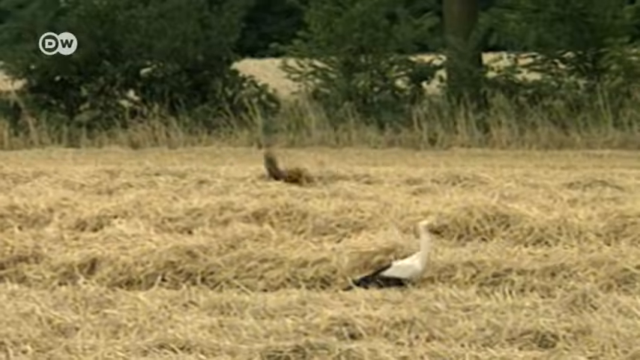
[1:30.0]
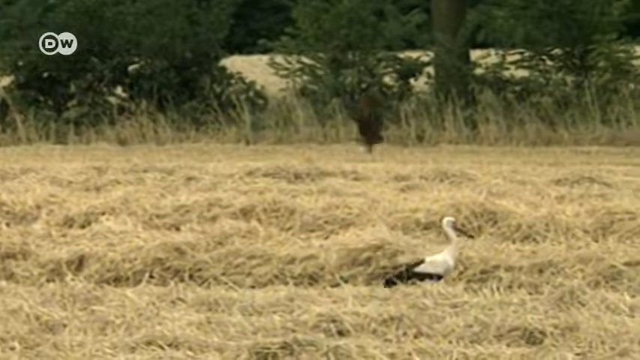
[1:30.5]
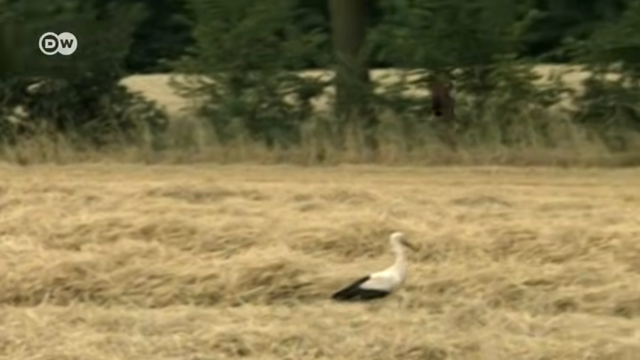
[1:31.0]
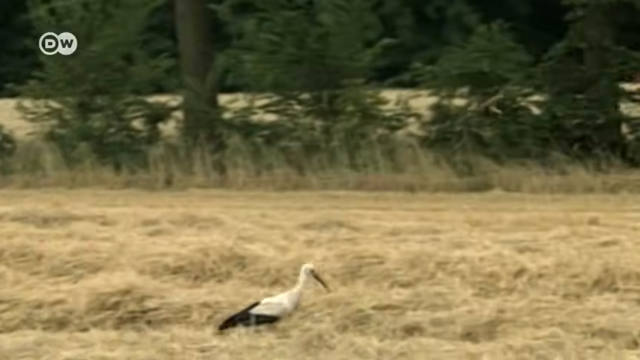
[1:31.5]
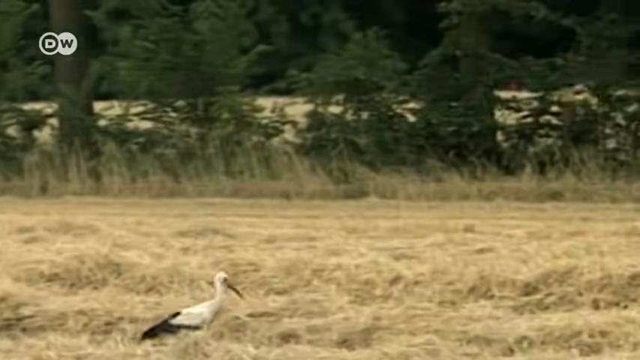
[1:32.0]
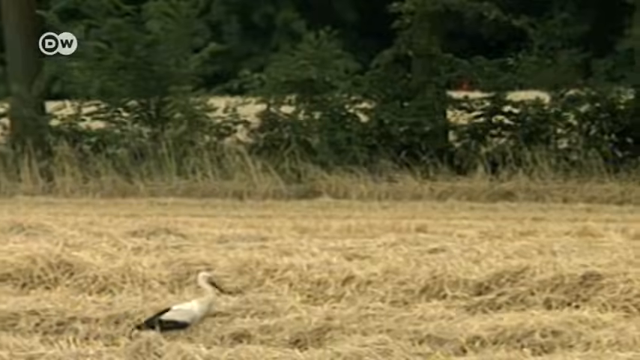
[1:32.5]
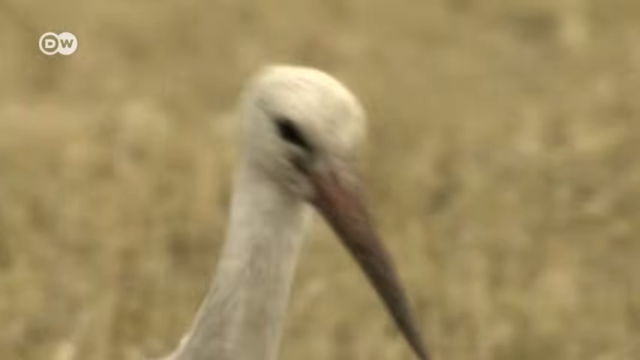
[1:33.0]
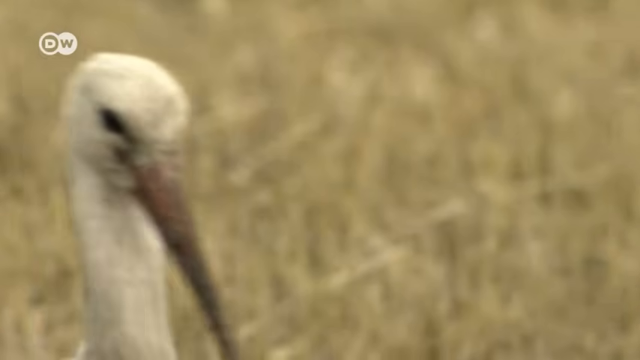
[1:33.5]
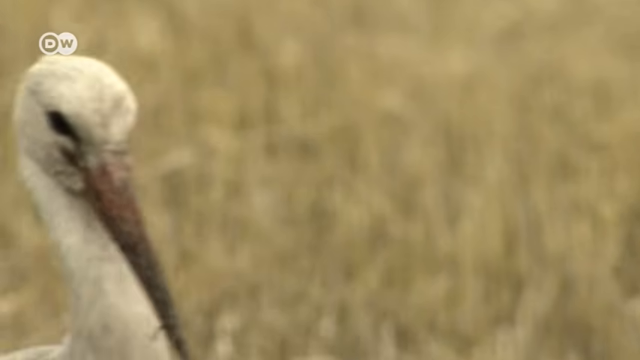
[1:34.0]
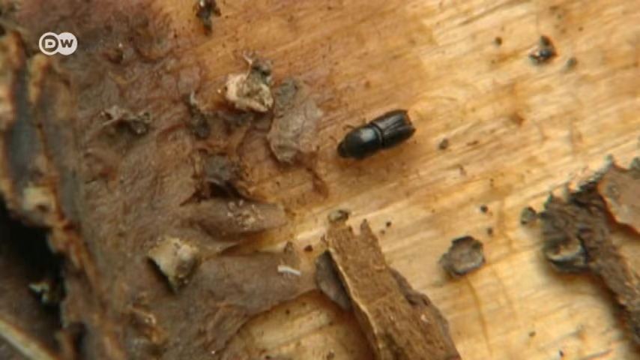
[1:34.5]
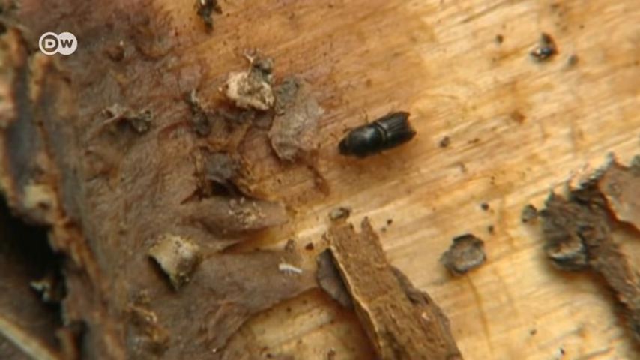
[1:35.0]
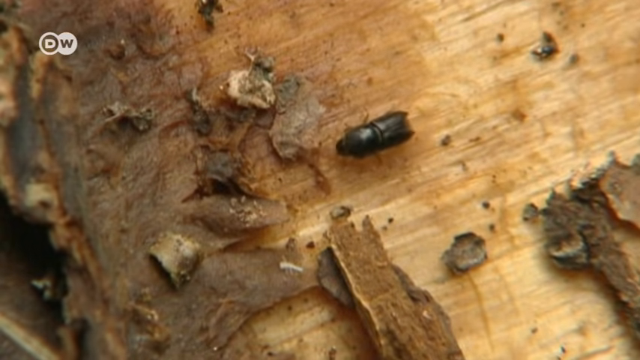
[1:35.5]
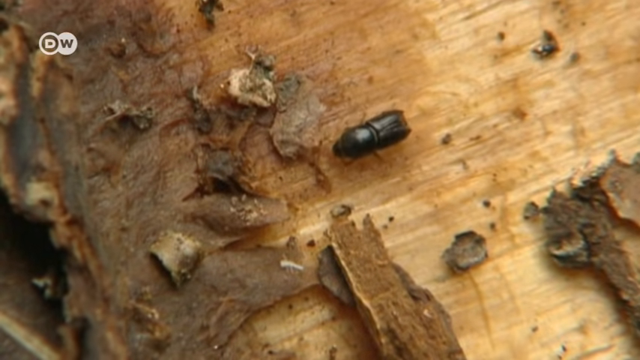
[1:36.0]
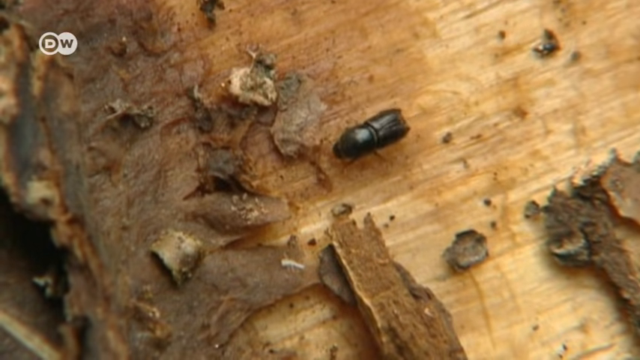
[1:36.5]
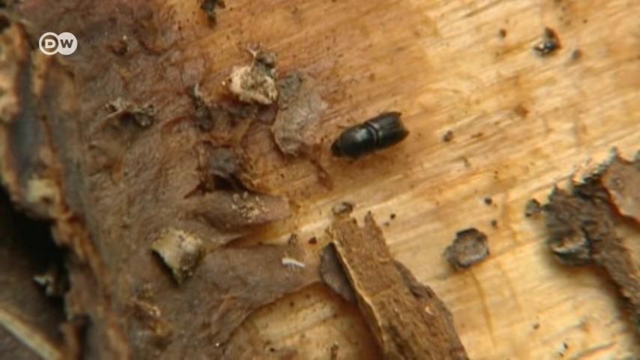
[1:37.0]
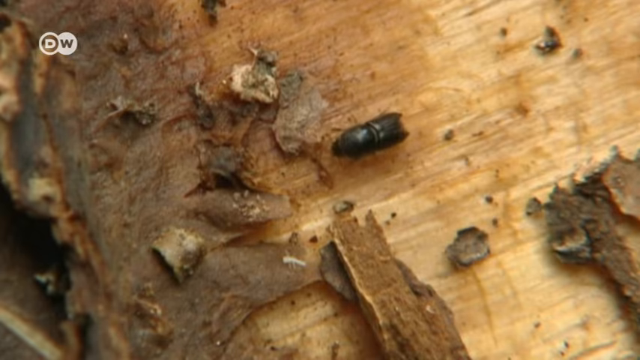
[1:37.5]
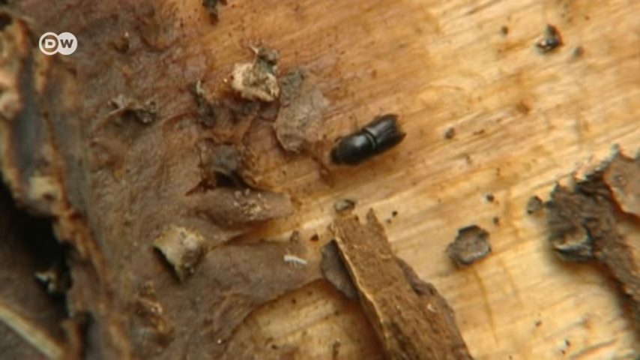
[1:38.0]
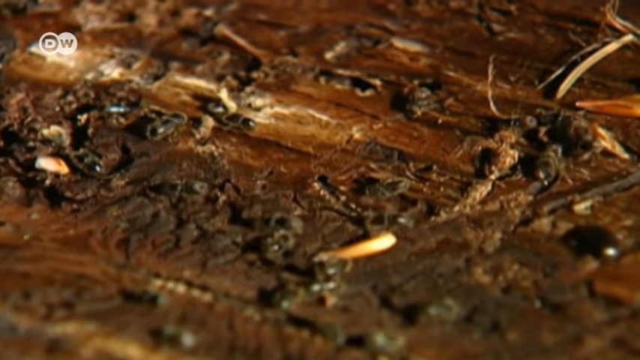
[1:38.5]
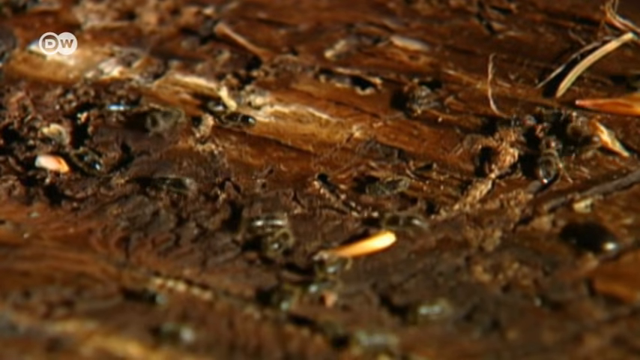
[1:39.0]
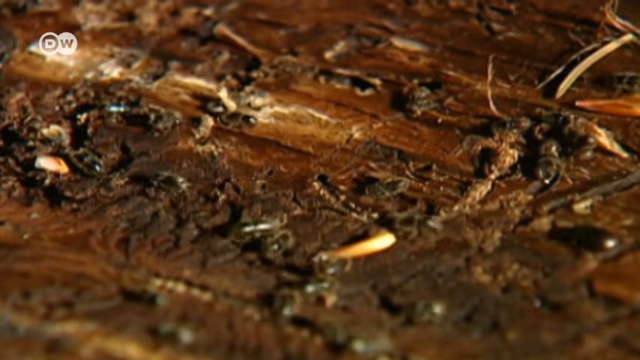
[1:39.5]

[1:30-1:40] The two birds on a very yellow, dry grassland try to find food. One of them flies away while the other walks around. The camera zooms into the face of the bird walking around the dry grassland. The next scene seems to show tree bark with an insect on it; the bark looks rather odd, as if it has some sort of disease. The insect crawls around, and then a group of black insects is also seen crawling around. It is hard to see what the insects are crawling on, but the surface has a lot of dark debris and mess and looks slightly muddy.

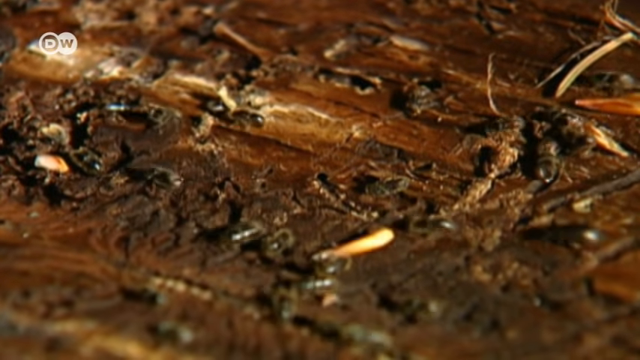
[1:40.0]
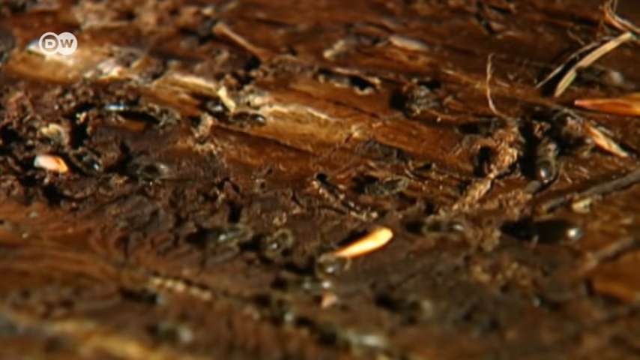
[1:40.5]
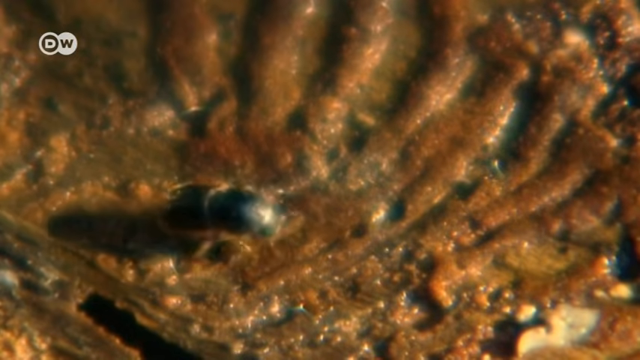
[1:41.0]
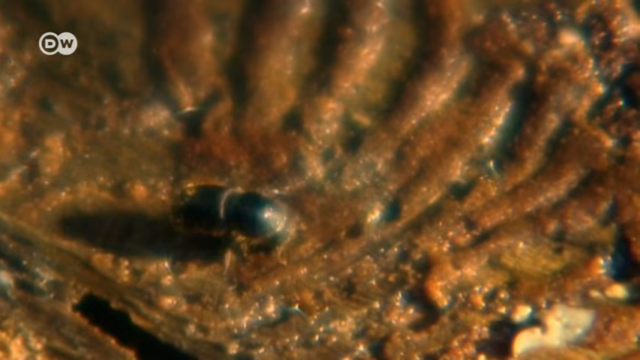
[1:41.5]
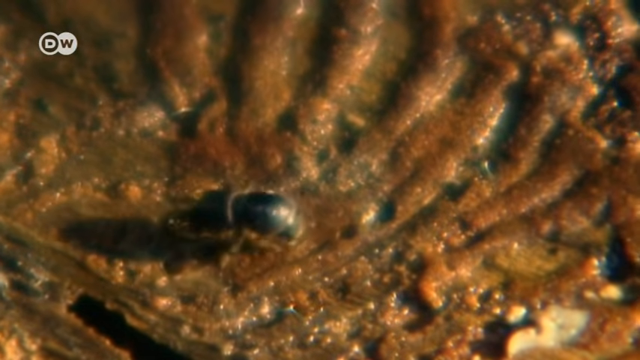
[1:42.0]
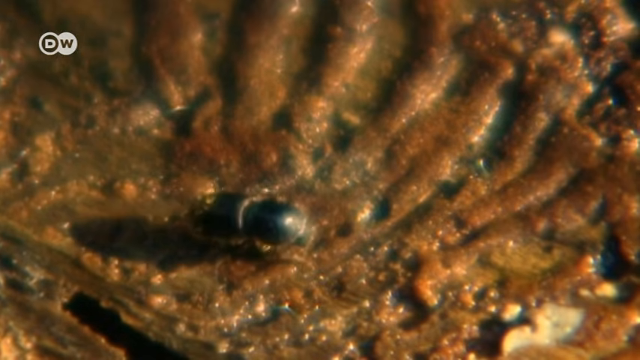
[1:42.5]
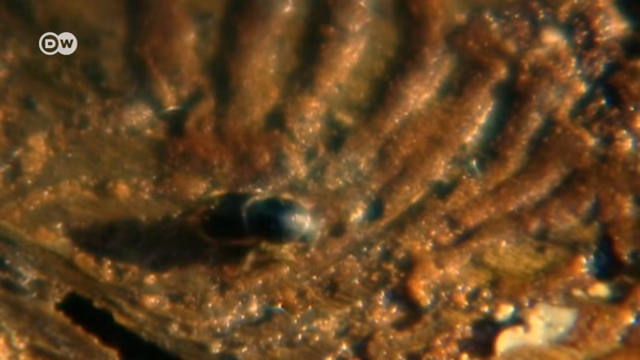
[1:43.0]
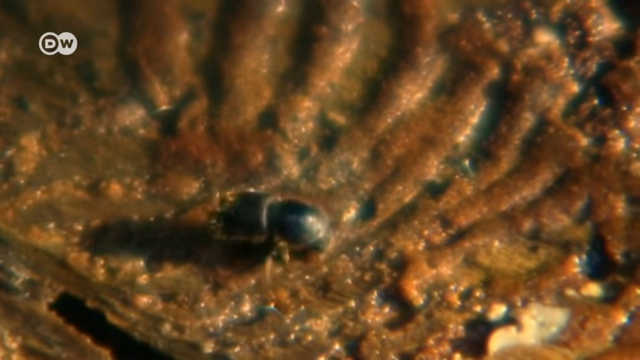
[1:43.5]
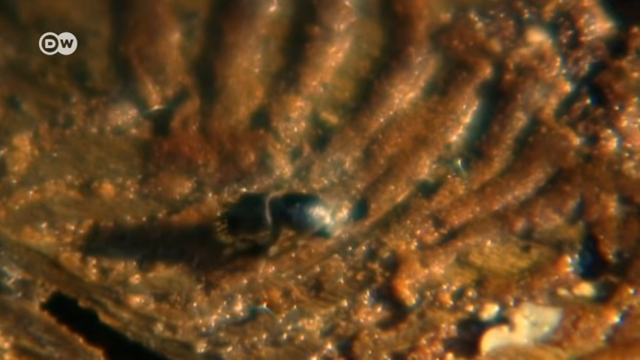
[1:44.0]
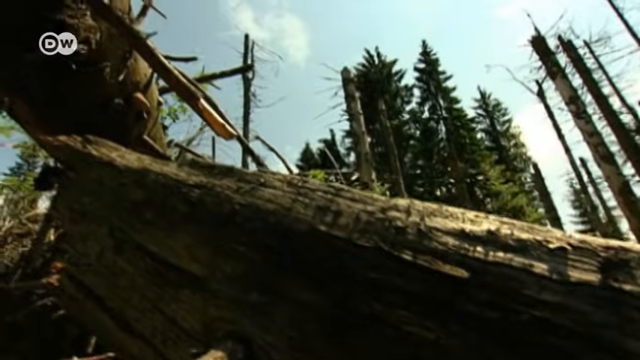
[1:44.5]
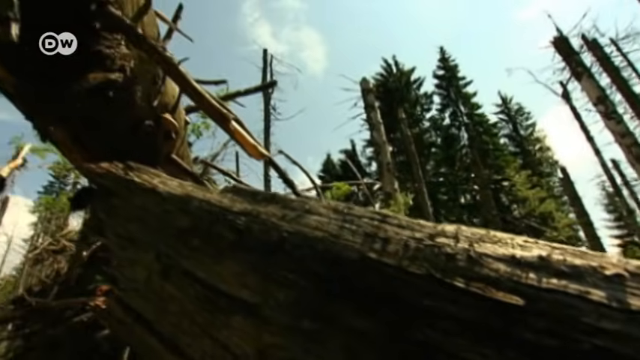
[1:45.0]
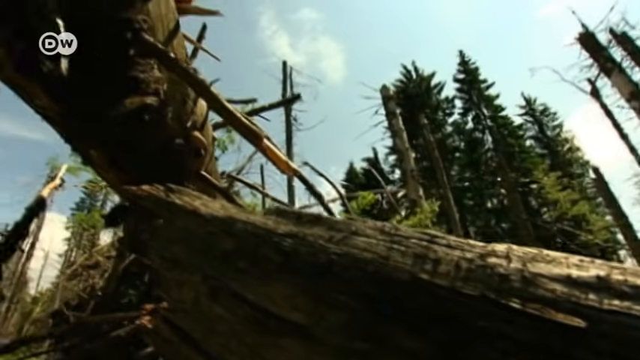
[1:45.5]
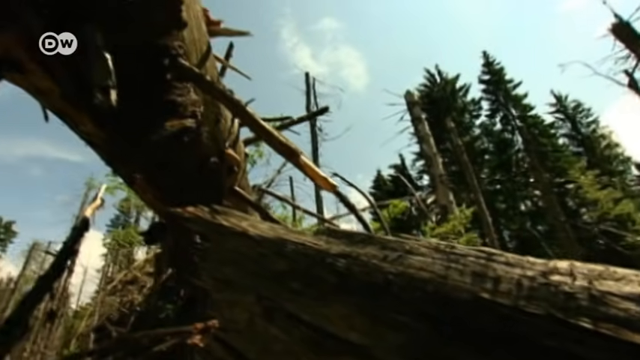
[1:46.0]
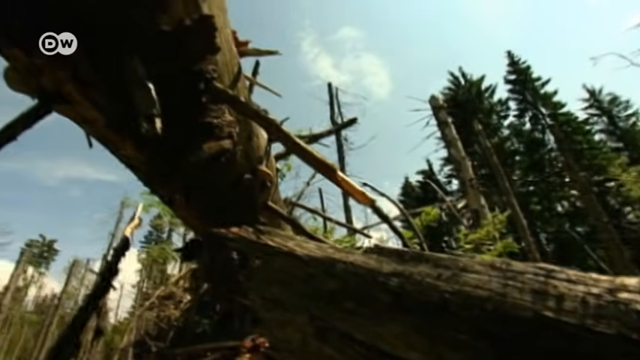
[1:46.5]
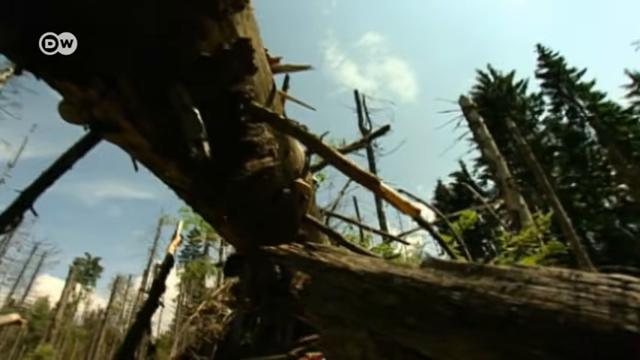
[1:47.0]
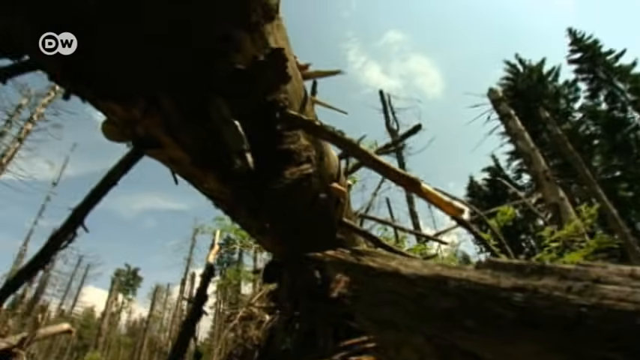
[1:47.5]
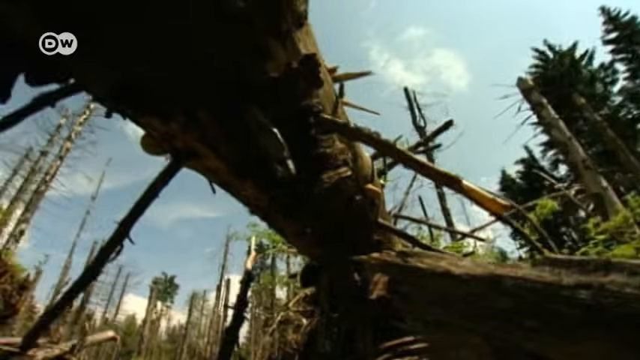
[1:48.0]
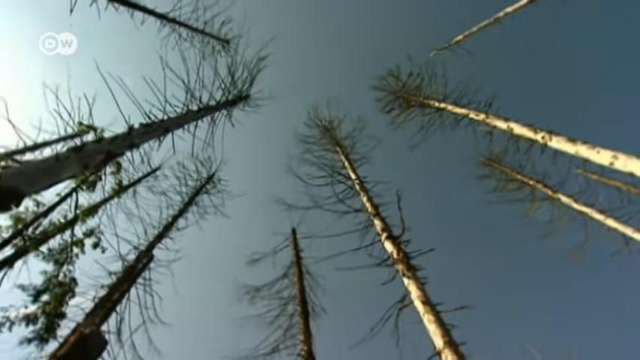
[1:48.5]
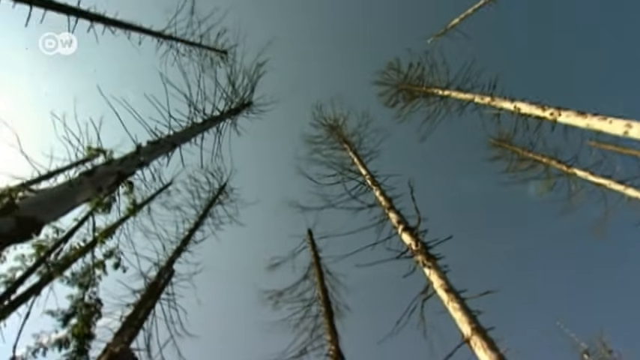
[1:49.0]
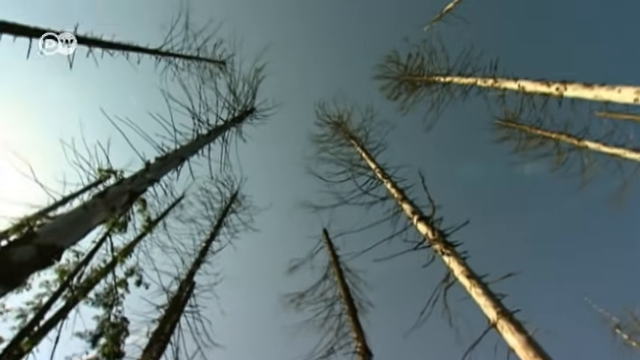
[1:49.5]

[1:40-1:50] A group of black insects, perhaps ants though it is hard to tell, is on a dark wood surface that is very muddy or full of debris. The insects crawl around. The camera zooms on one particular crawling insect, which is not an ant, though it is hard to tell. The camera then zooms out to show dead trees with no leaves at all; they are extremely tall, and some have fallen to the ground. The surface seen before was perhaps degraded tree, with the insects crawling on the tree bark.